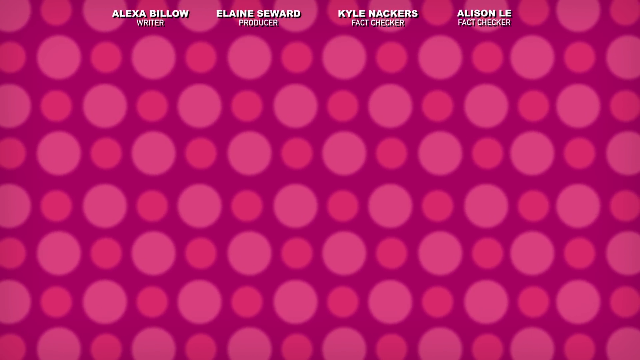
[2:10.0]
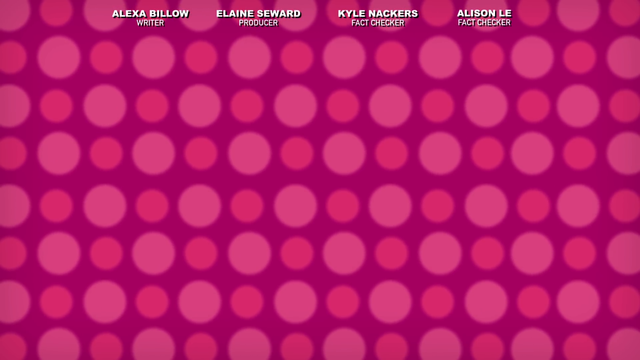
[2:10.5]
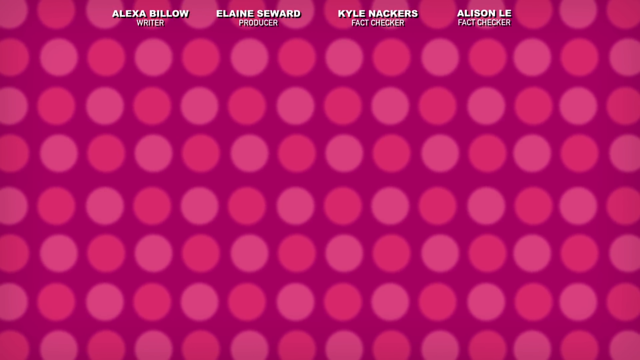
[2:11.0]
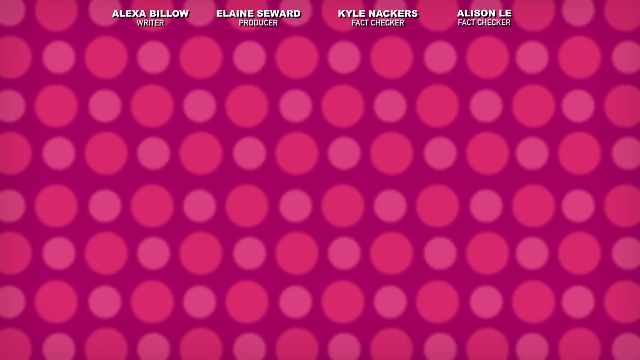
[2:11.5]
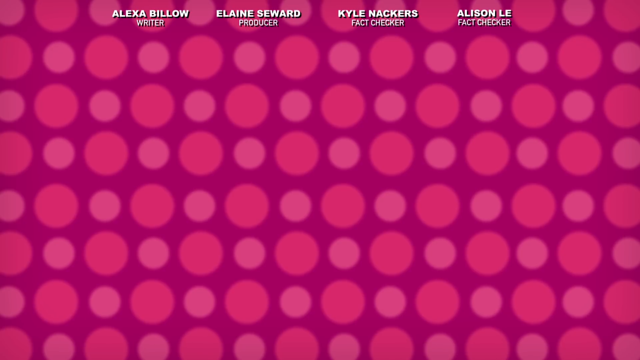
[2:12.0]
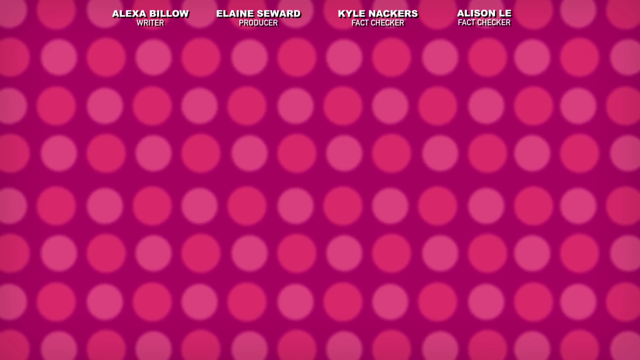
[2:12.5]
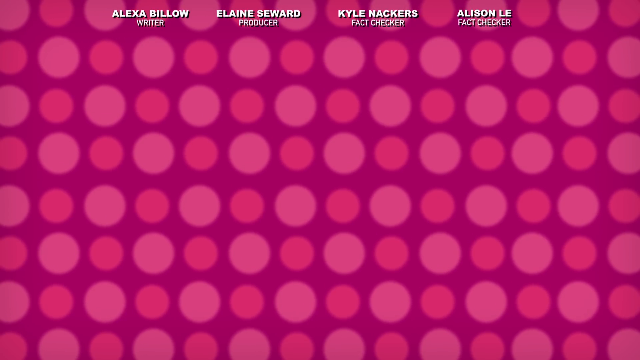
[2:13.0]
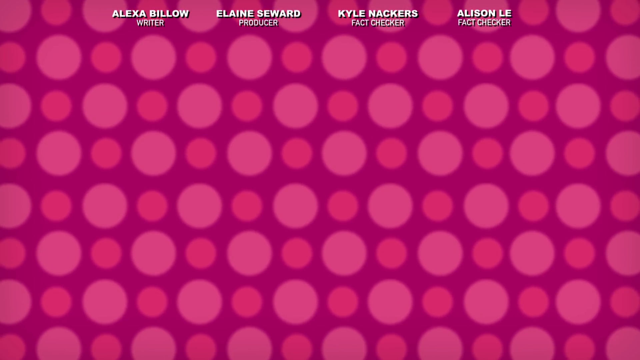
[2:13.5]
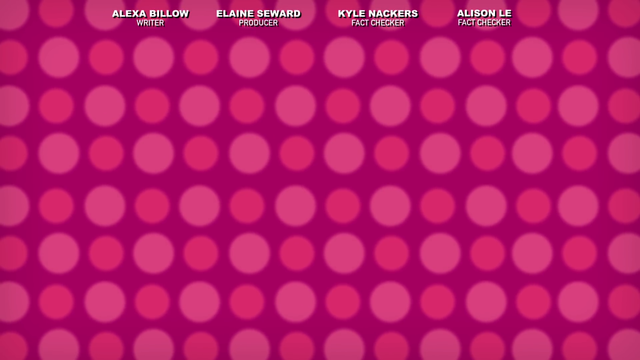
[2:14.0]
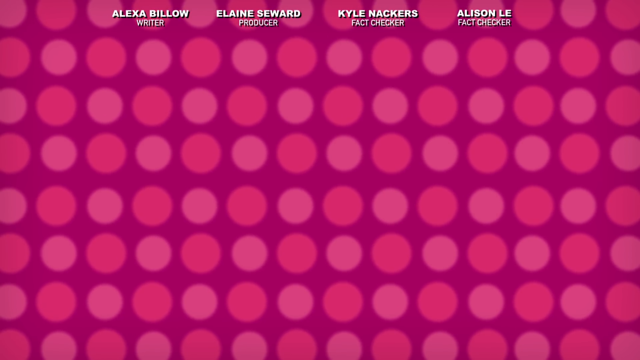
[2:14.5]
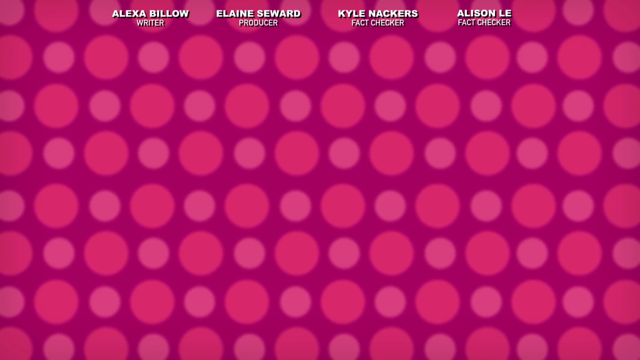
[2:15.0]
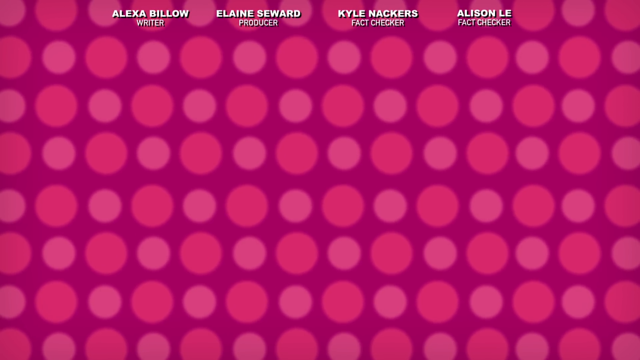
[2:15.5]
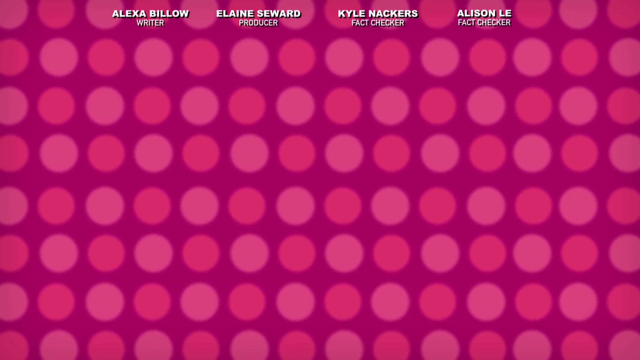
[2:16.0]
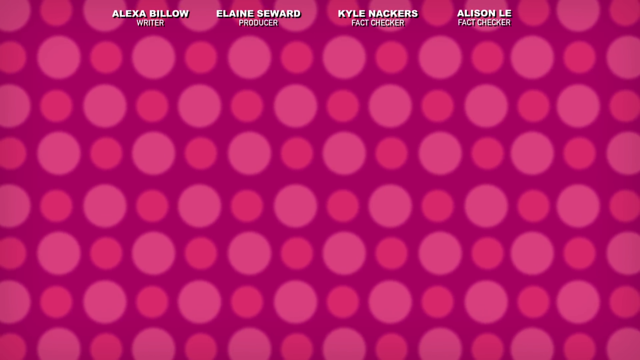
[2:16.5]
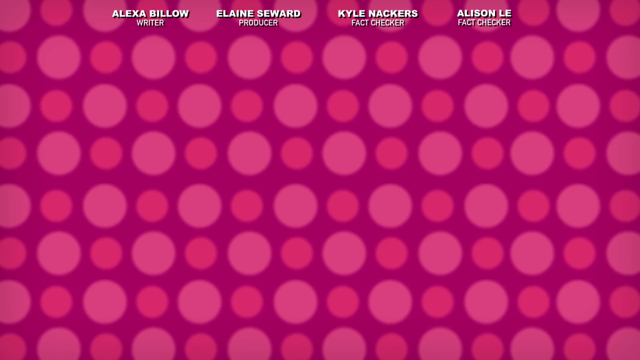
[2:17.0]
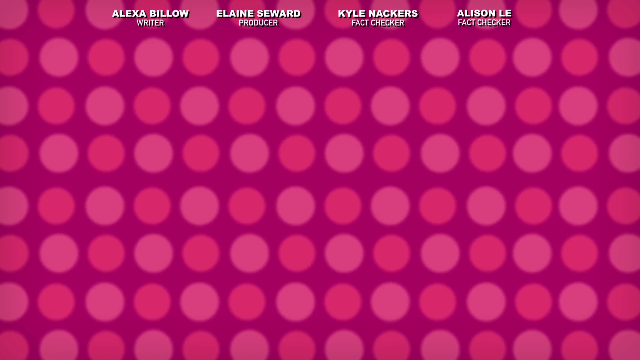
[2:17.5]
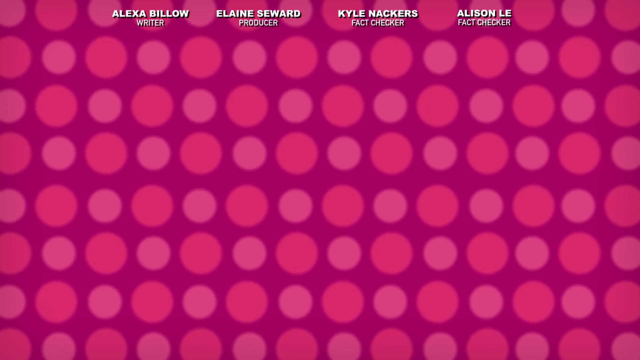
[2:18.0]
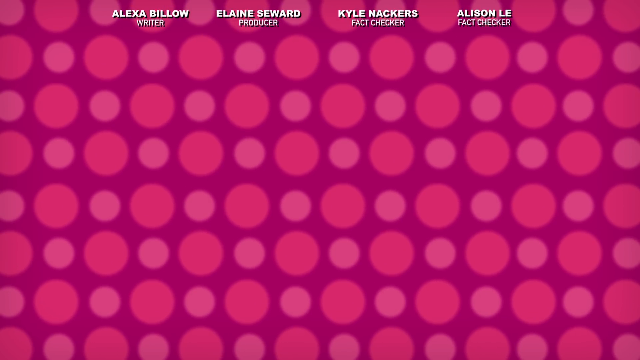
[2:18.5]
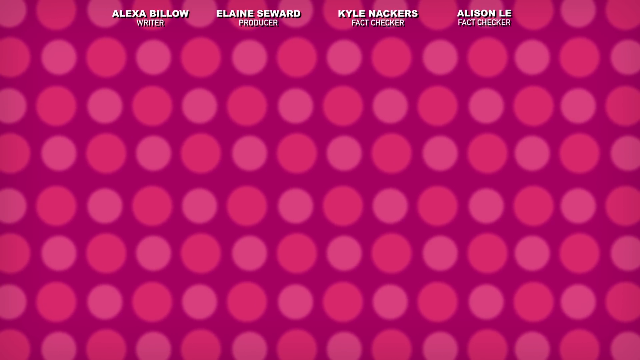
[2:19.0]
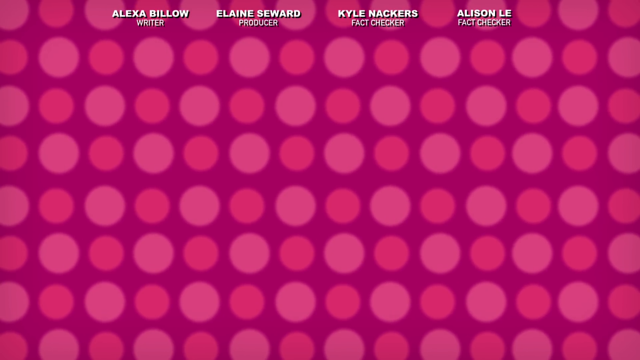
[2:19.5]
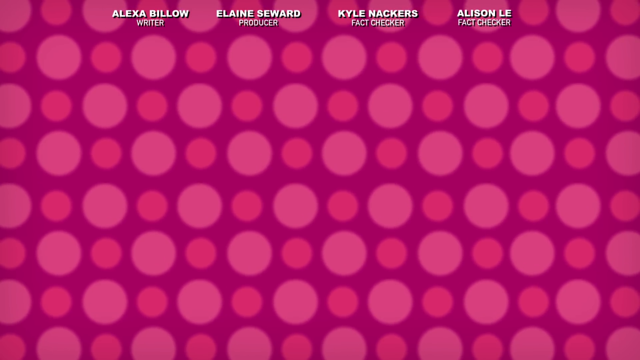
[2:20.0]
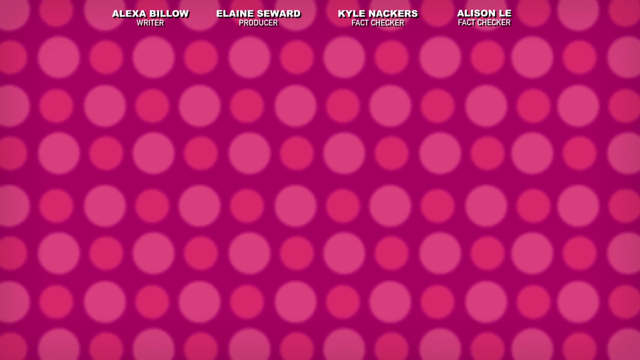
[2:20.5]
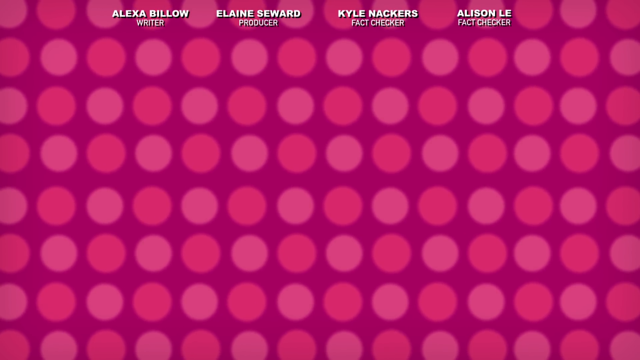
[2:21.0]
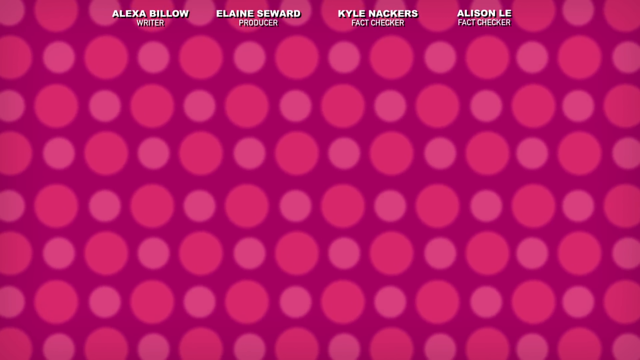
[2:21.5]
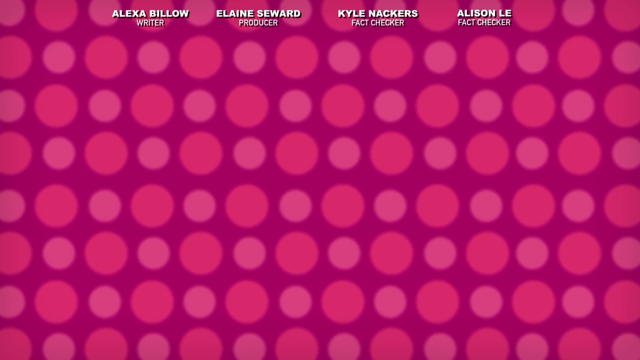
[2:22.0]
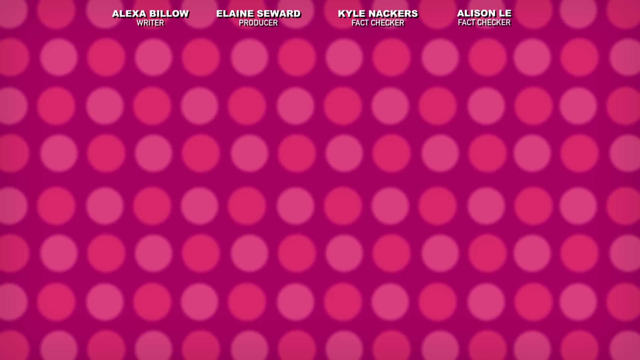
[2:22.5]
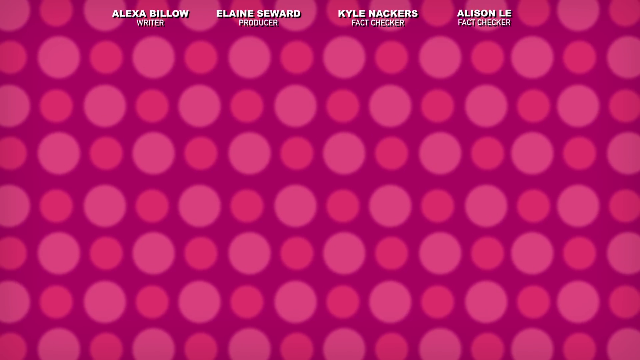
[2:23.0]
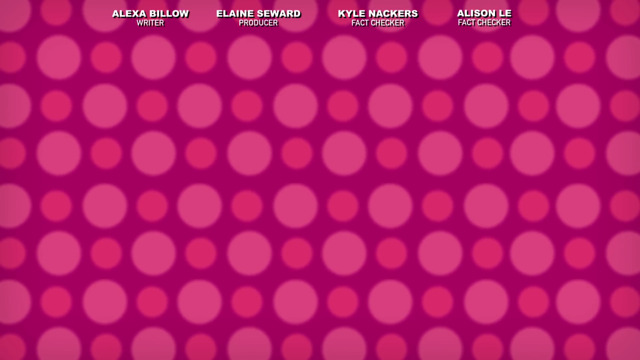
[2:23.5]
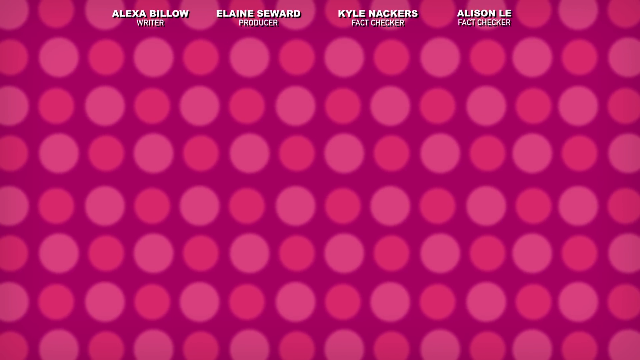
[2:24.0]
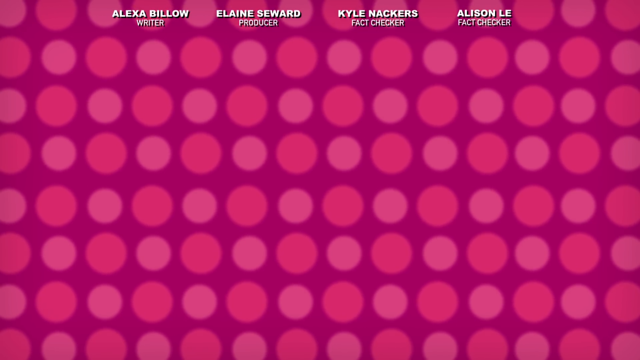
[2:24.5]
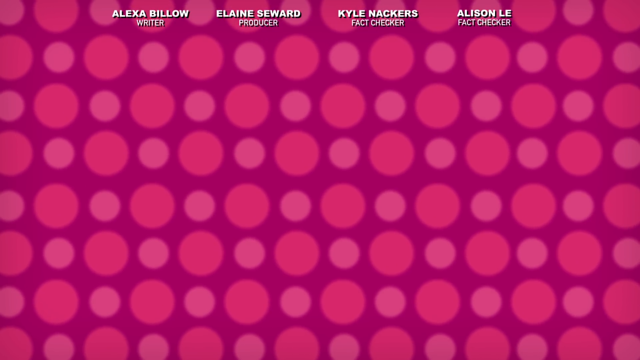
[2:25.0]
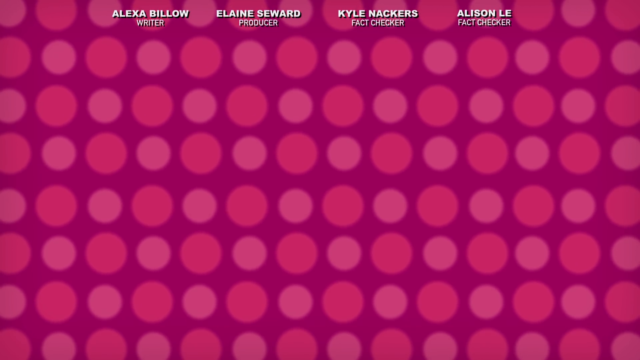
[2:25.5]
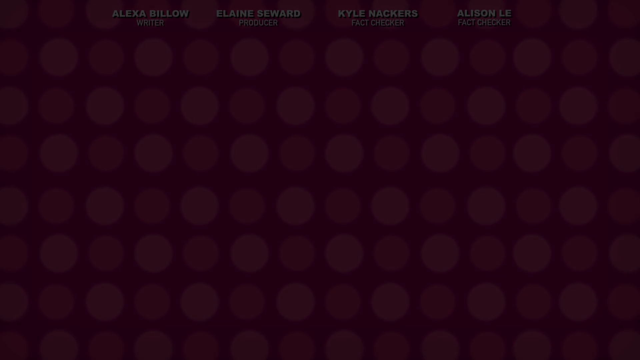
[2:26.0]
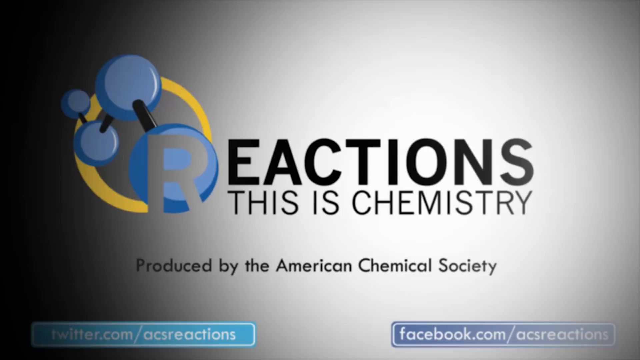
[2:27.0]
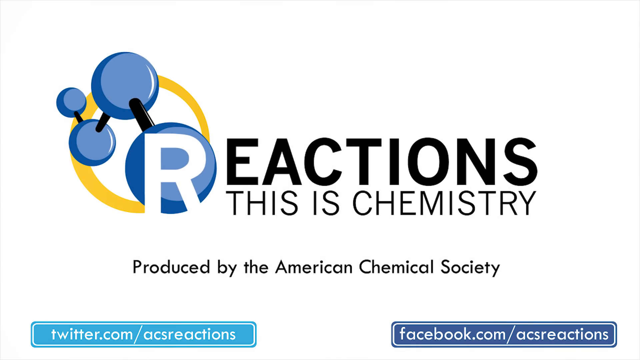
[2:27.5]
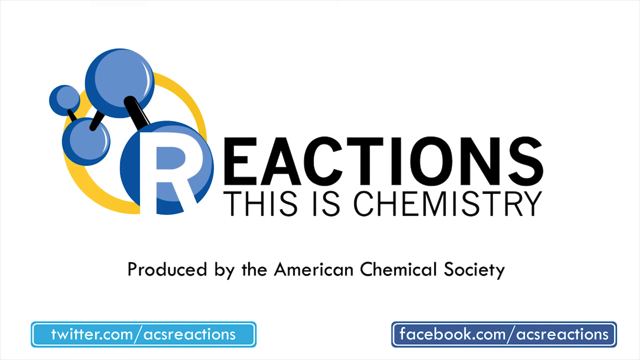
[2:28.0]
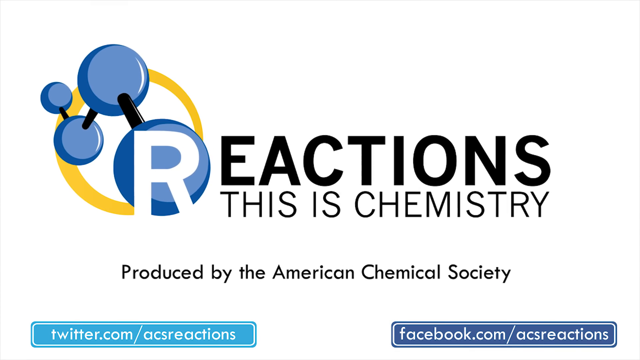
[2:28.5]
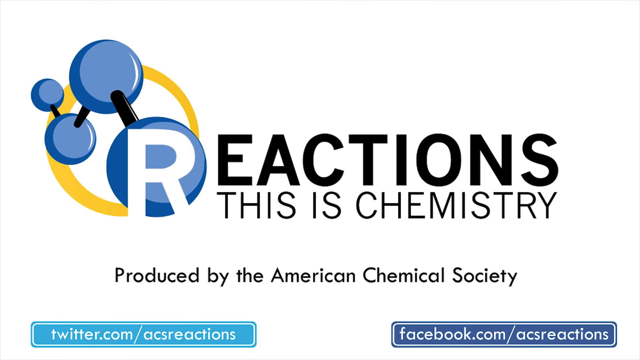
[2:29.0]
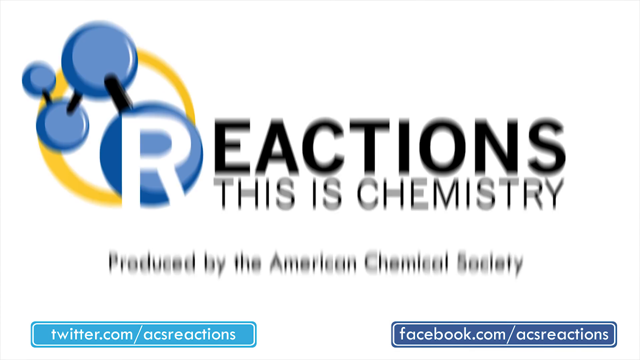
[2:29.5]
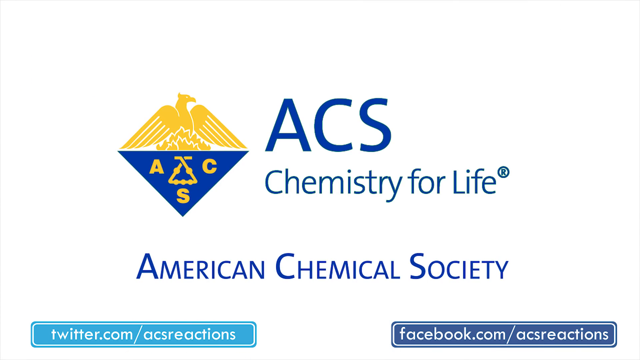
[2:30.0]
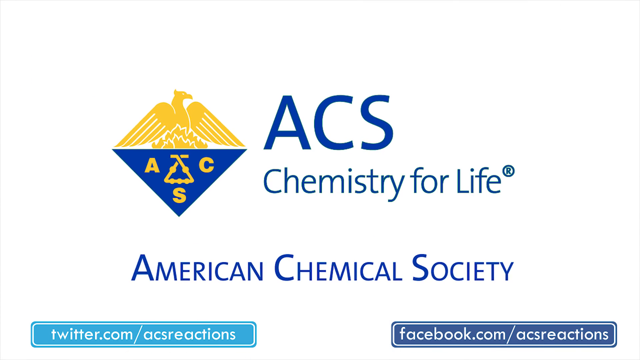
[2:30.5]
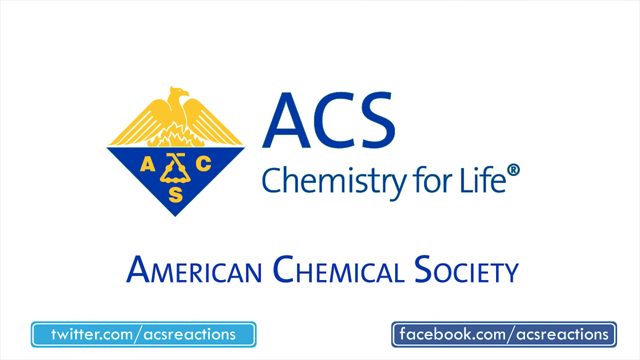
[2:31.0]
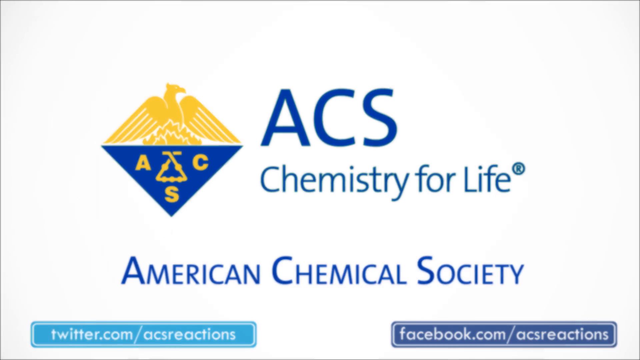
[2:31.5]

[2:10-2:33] The credits remain at the top of the screen for a while as the circles in the background get bigger and smaller. The background is dark pink, and the circles are two lighter shades of pink, kind of going in and out. The screen then fades to black and a logo appears: a picture of an atom with blue circles with black lines and a white R in the front blue circle, and a yellow circle in the back whose inside is left white. The text says "reactions", with the R in white and the rest of the word in black. Below it, in smaller all-black font, it says "this is chemistry", and below that, in the center of the screen in black font of an even smaller size, it says "produced by the American Chemical Society". A Twitter handle and a Facebook page are at the very bottom of the screen.